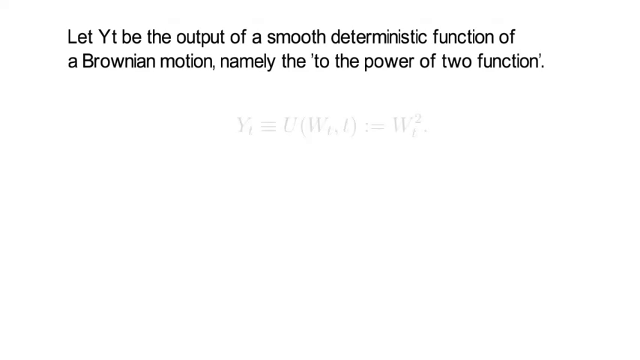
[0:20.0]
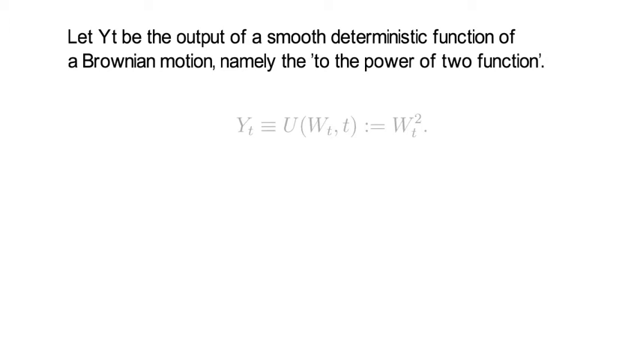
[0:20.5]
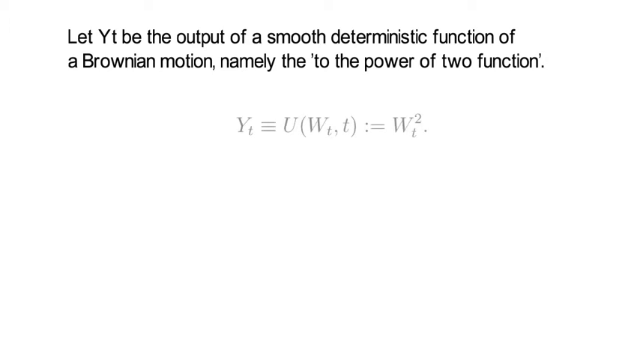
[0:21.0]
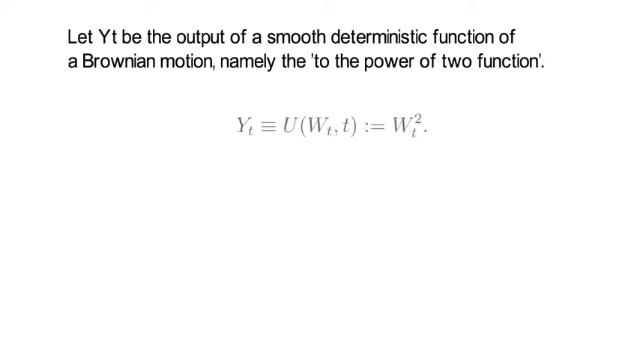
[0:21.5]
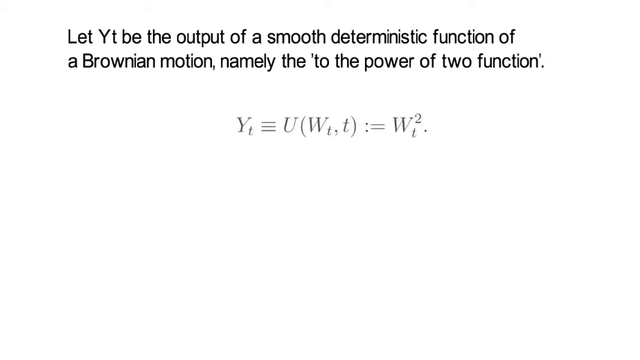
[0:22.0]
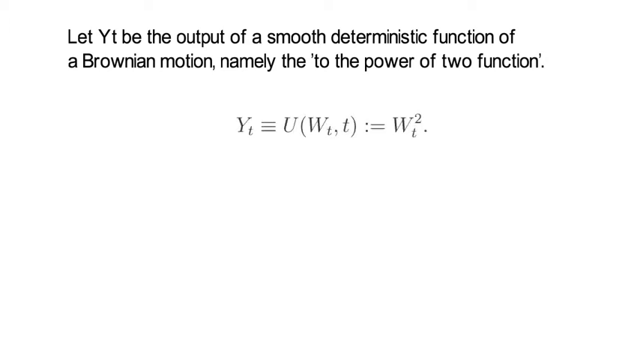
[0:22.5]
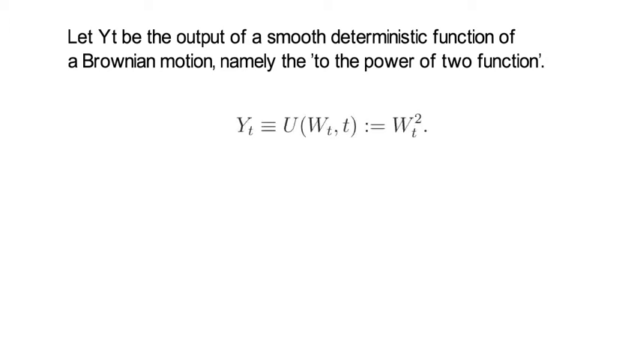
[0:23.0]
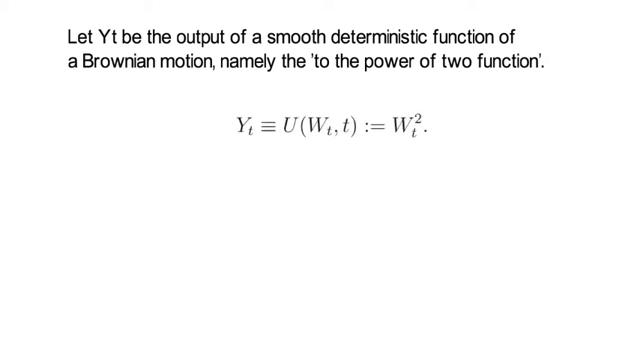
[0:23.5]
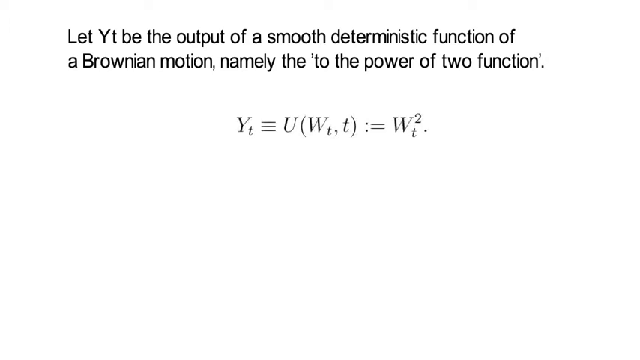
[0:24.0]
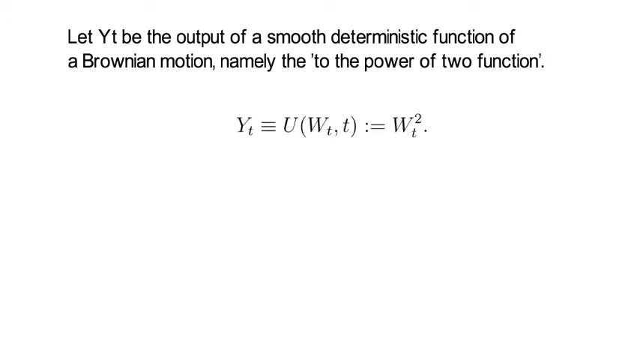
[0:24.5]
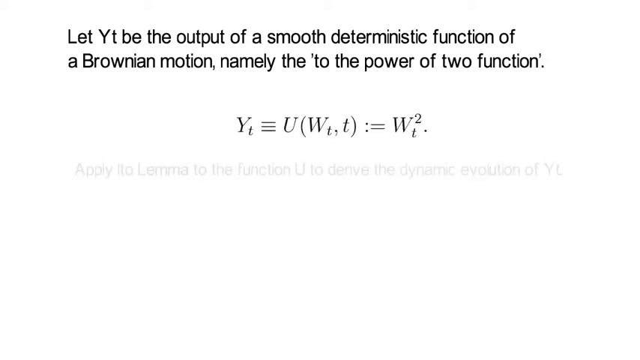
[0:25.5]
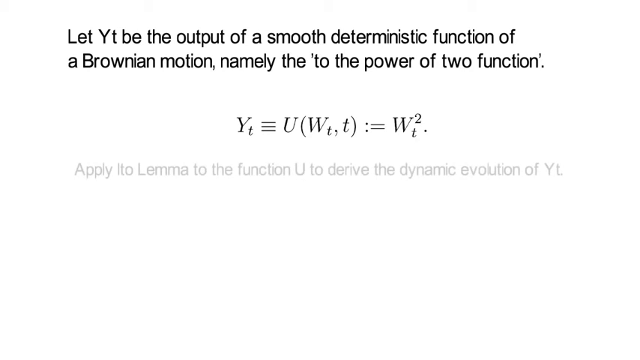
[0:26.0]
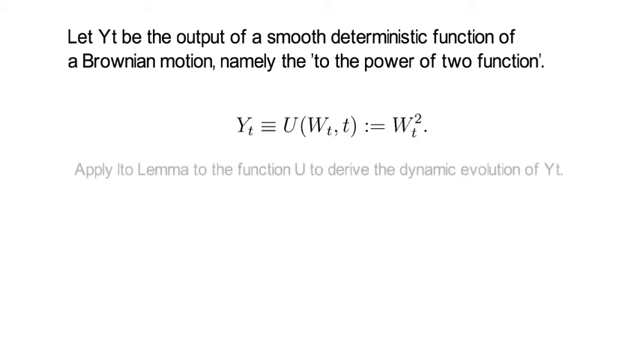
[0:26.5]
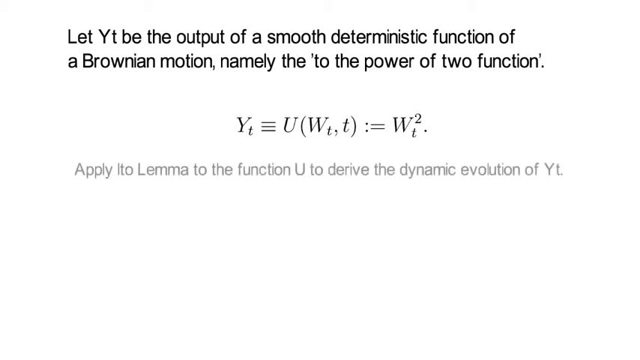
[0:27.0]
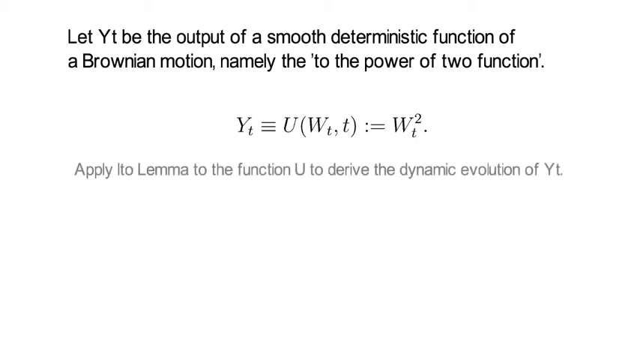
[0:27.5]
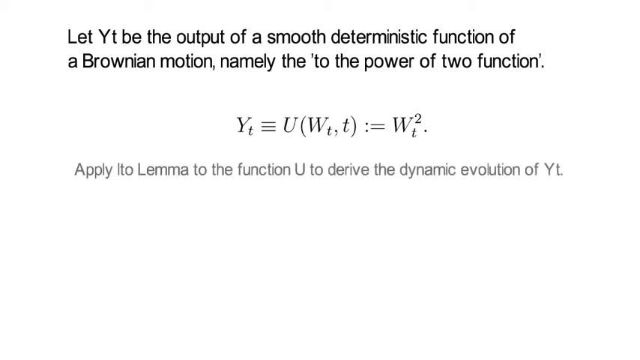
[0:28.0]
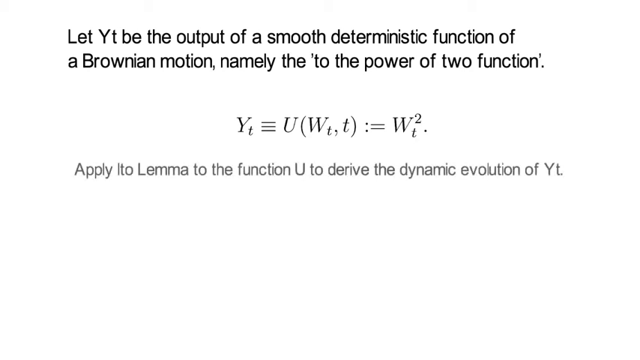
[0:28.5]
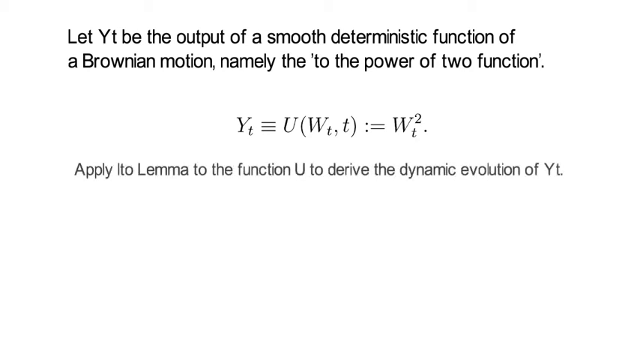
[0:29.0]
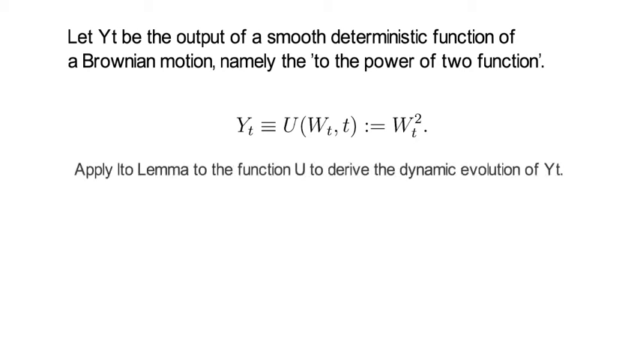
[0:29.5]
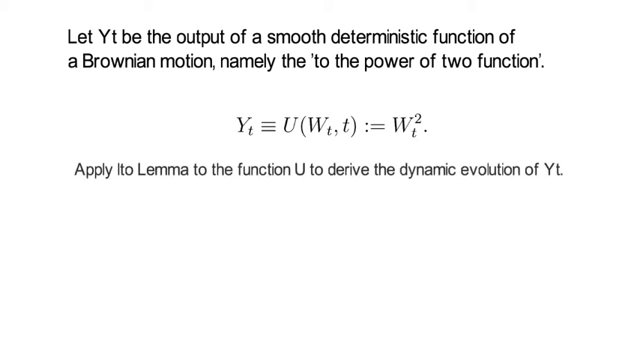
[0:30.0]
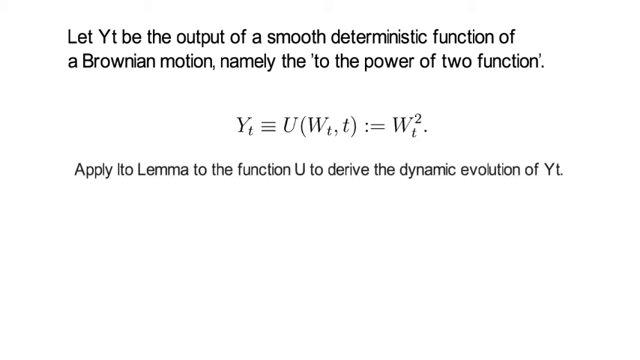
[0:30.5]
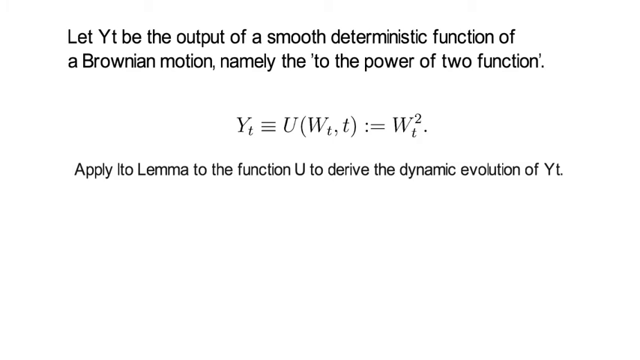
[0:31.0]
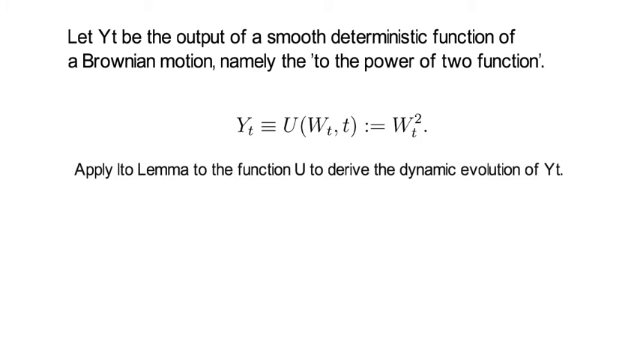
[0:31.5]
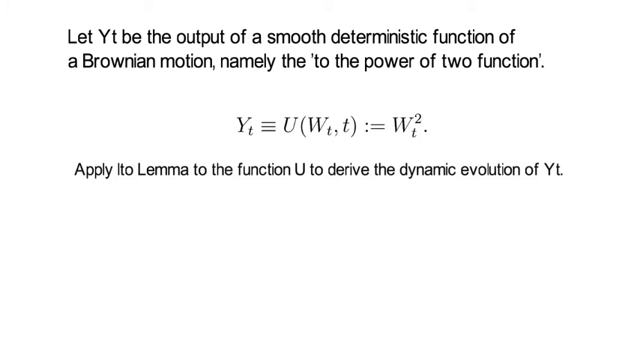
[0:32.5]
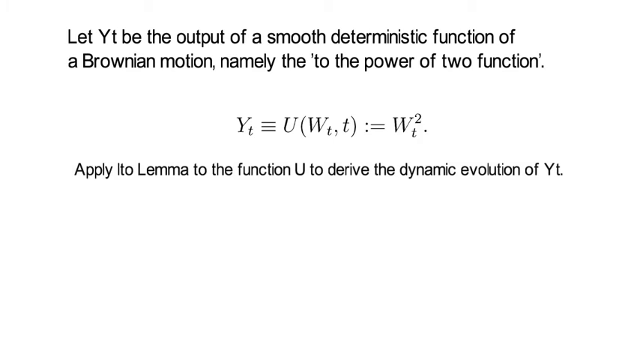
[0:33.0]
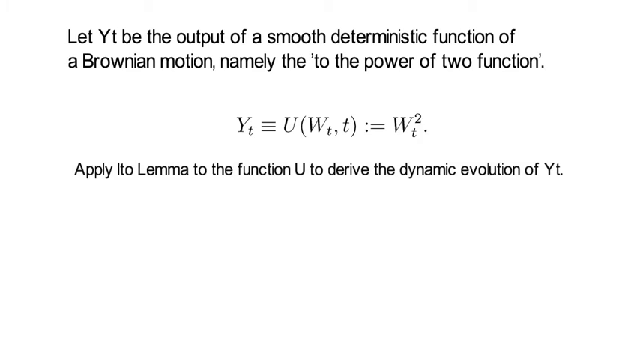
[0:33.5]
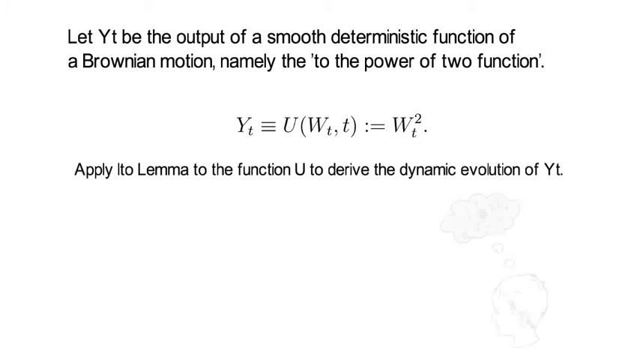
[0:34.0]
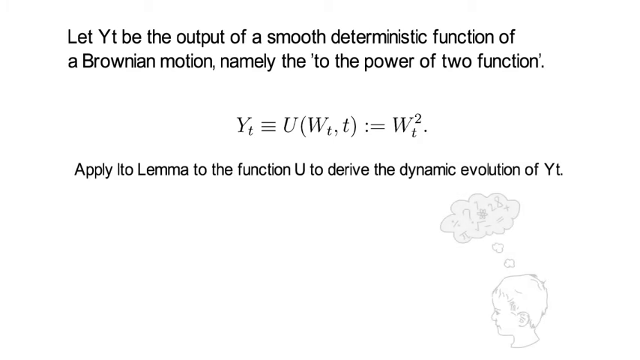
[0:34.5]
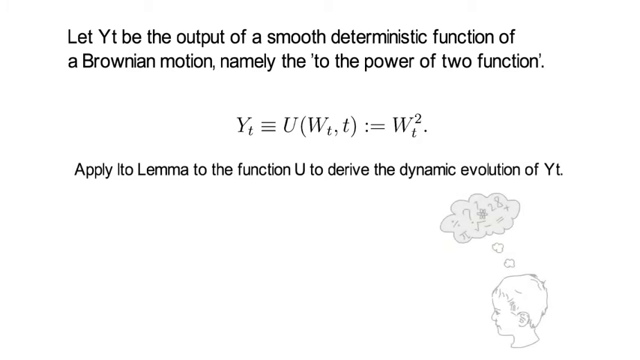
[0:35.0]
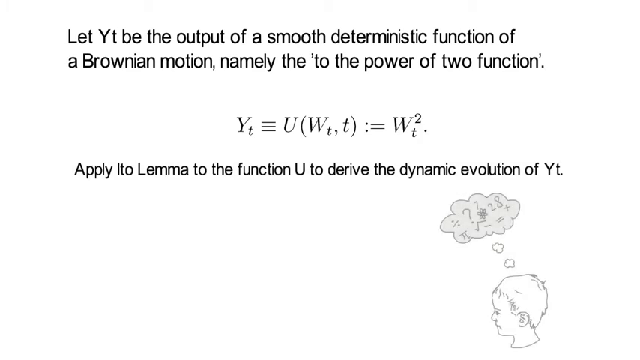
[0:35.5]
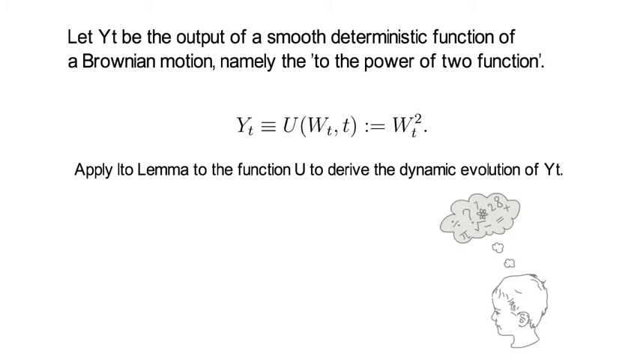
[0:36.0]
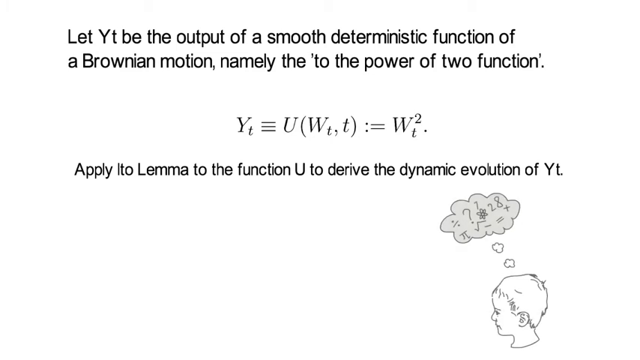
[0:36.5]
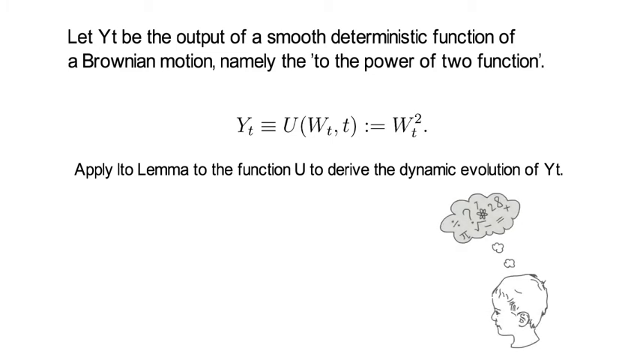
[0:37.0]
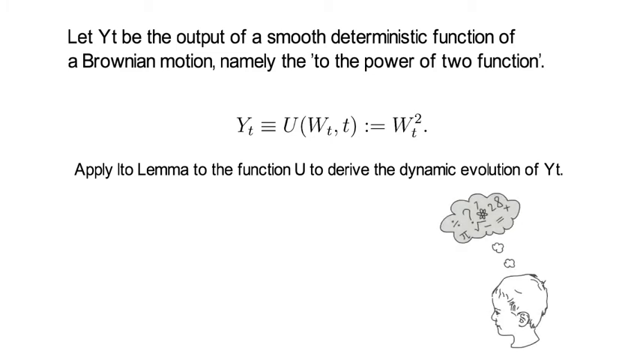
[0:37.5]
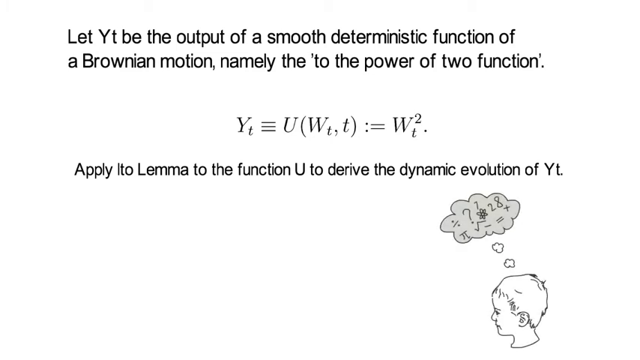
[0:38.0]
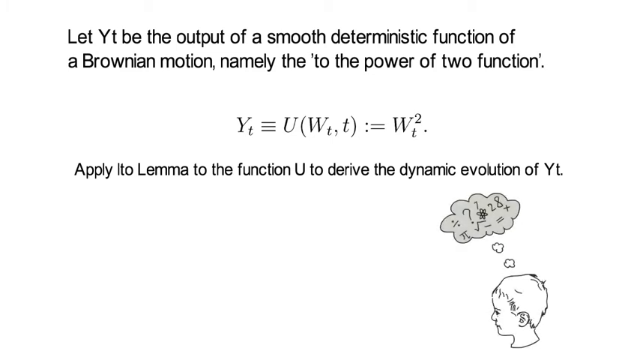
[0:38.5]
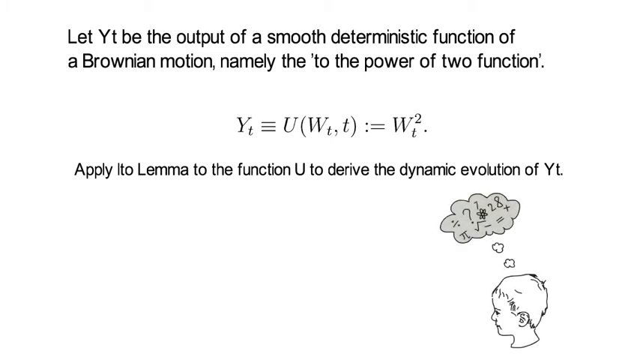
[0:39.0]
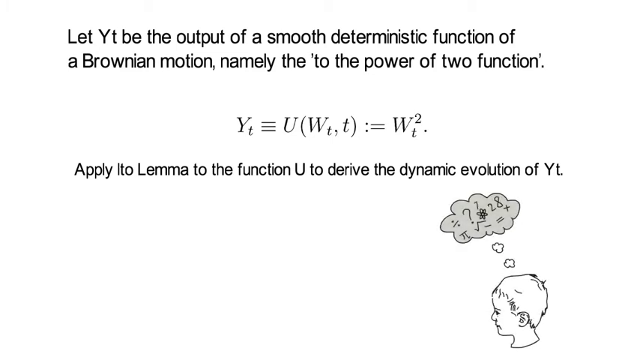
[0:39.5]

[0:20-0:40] The slide continues with a formula: y t, an equivalence sign with three horizontal lines, u with the parameters W t and t in parentheses, then a punctuation mark followed by an equal sign, resulting in W squared with a t below it and a dot at the end. The text then says to apply the LTO (or Ito) lemma to the function u to derive the dynamic evolution of y t. In the lower right corner, a caricature of a child ponders with some symbols. The presentation continues in the same simplistic manner, highly theoretical and defined mostly by formulas with little explanation.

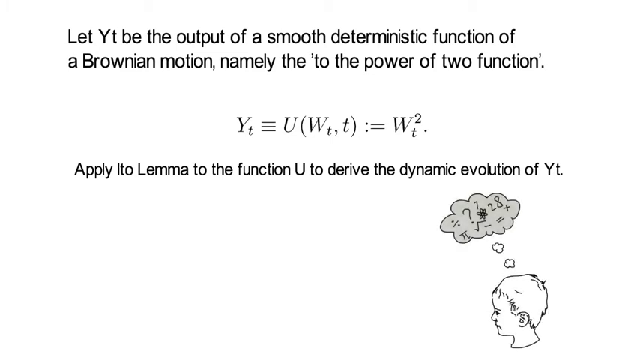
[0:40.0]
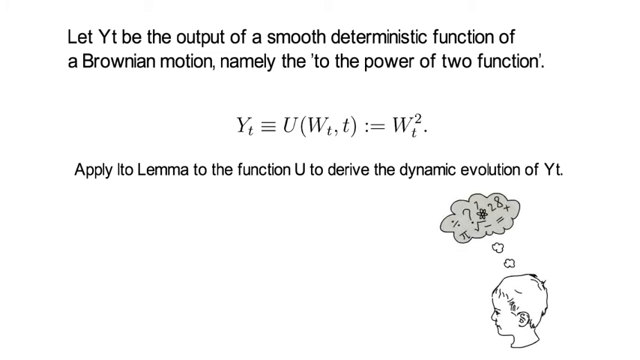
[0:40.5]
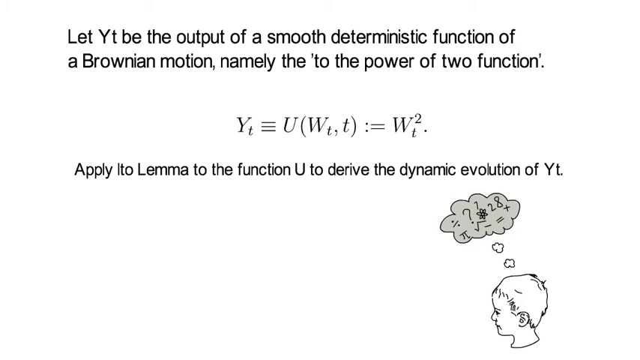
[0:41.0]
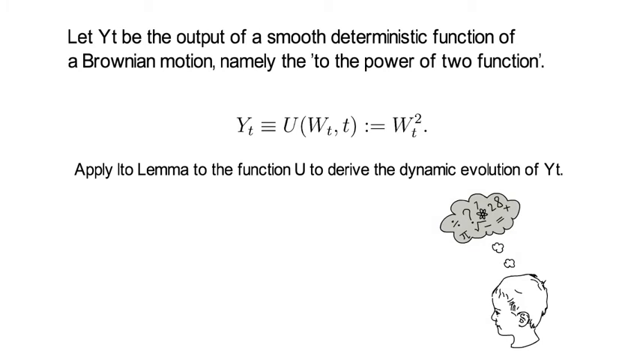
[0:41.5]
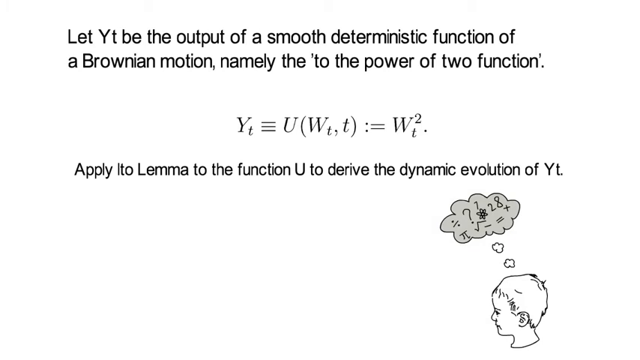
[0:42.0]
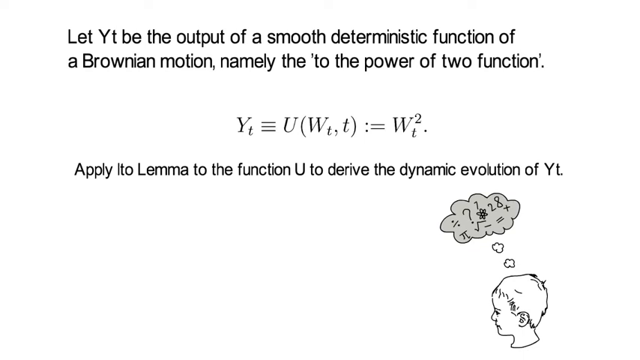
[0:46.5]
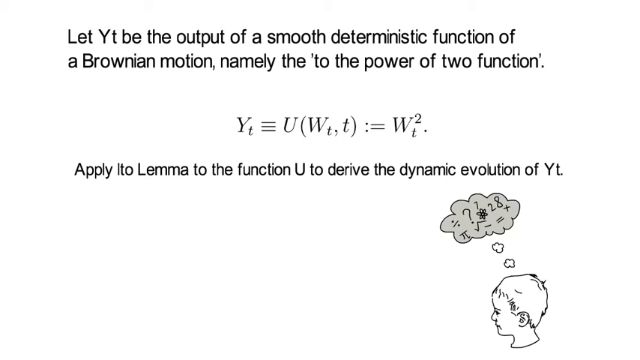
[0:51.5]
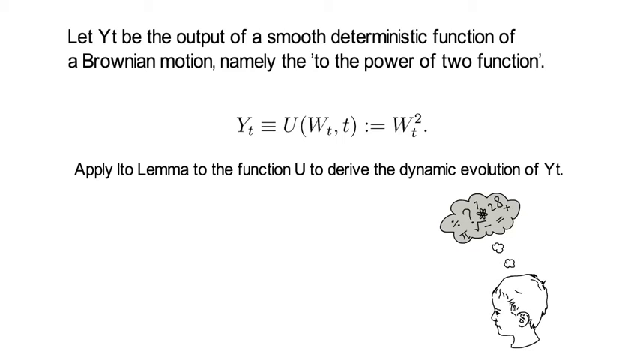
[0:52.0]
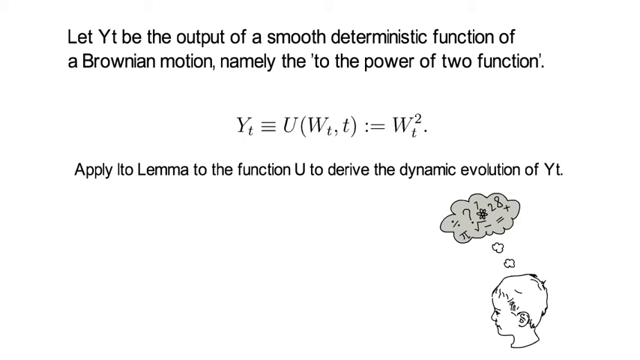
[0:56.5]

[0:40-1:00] The view stays on the same slide, with the caricature of a child pondering mathematical formulas in the lower right. The centered text reads "let y t be the output of a smooth deterministic function of a Brownian motion namely the to the power of two function," followed by the formula y of t, an equivalence sign with three horizontal lines, the function u with parameters W t and t, resulting in W squared t, and the instruction to apply the LTO lemma to the function u to derive the dynamic evolution of y t. The background remains plain white, with the information in plain black characters typical of theoretical mathematical and physics text.